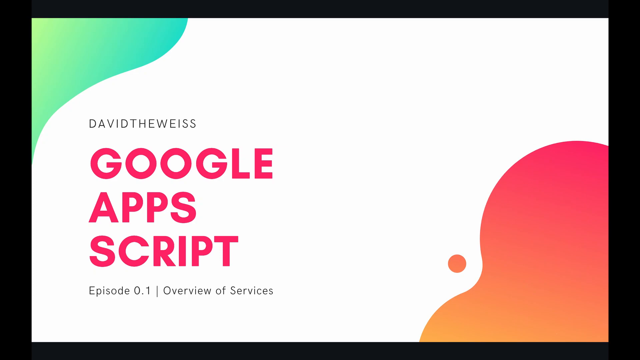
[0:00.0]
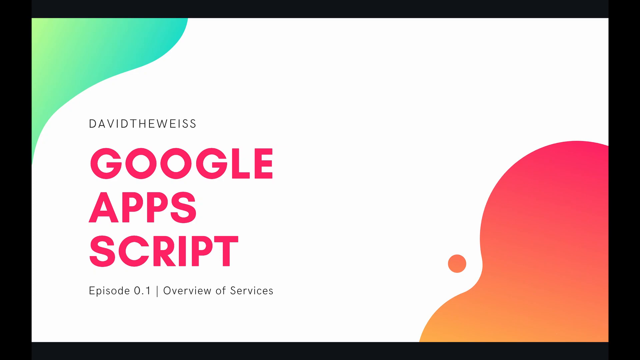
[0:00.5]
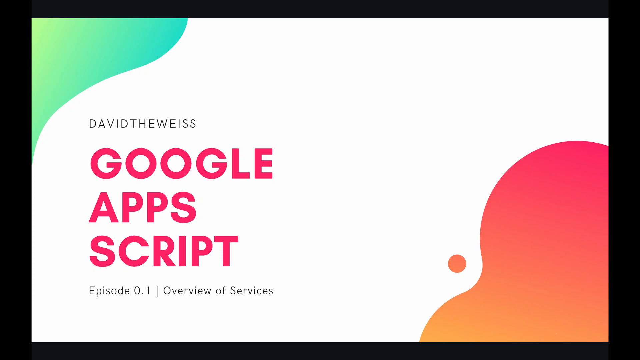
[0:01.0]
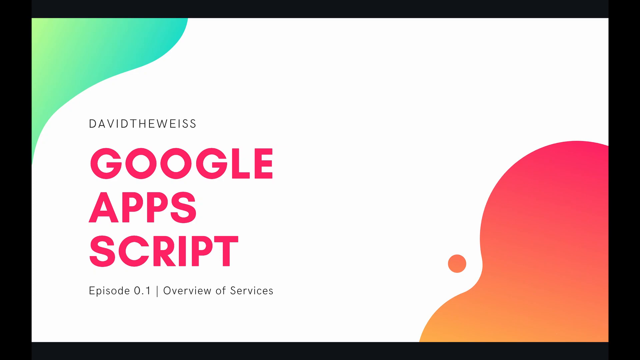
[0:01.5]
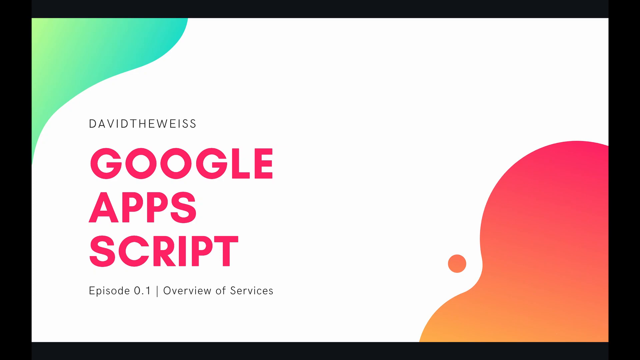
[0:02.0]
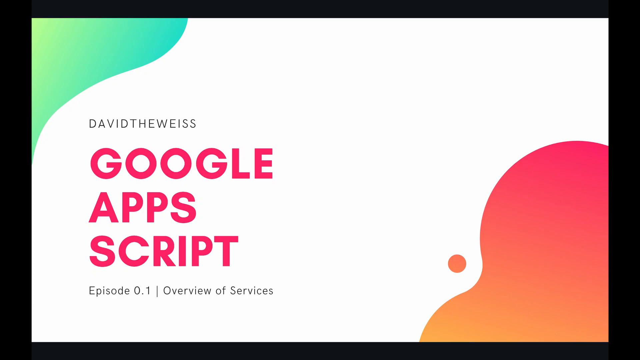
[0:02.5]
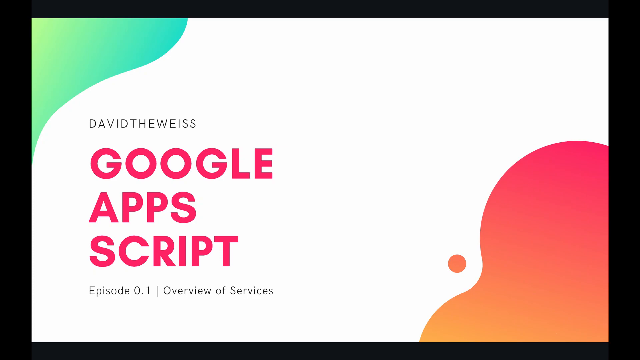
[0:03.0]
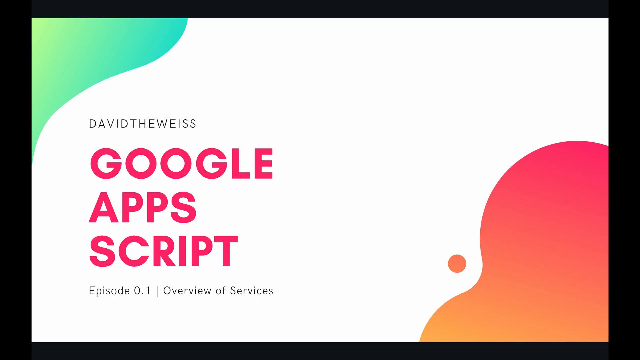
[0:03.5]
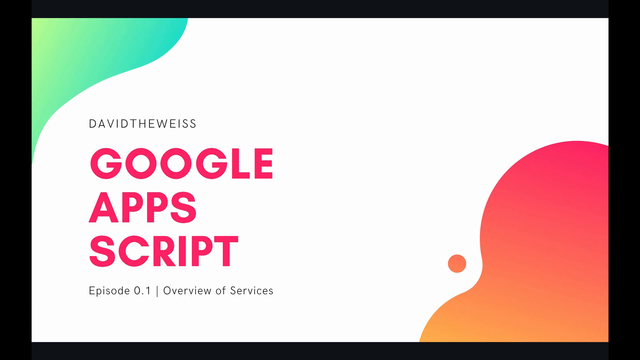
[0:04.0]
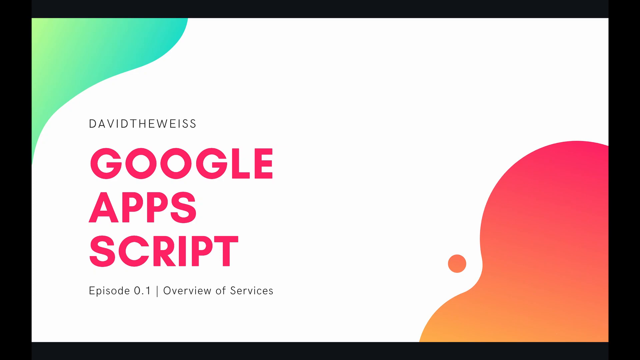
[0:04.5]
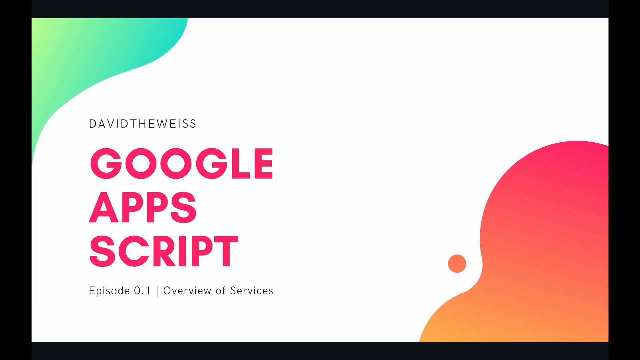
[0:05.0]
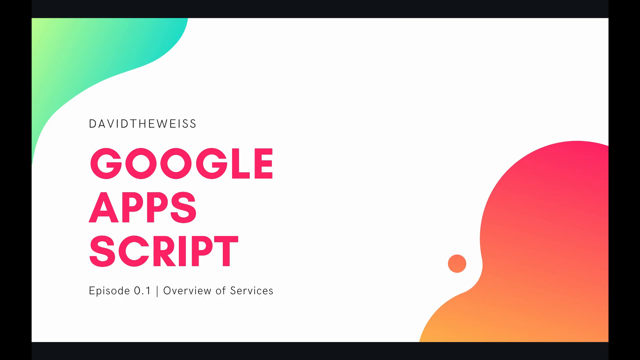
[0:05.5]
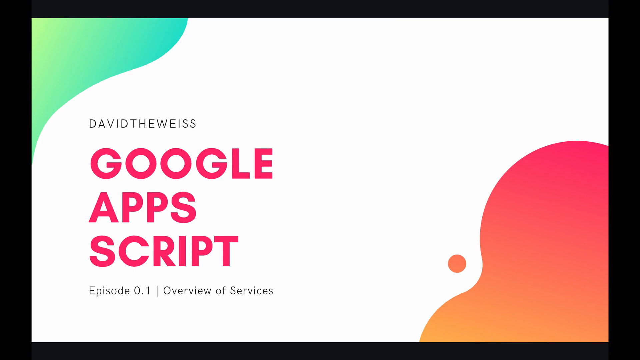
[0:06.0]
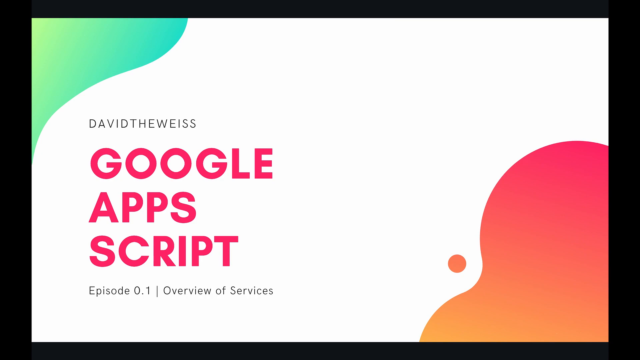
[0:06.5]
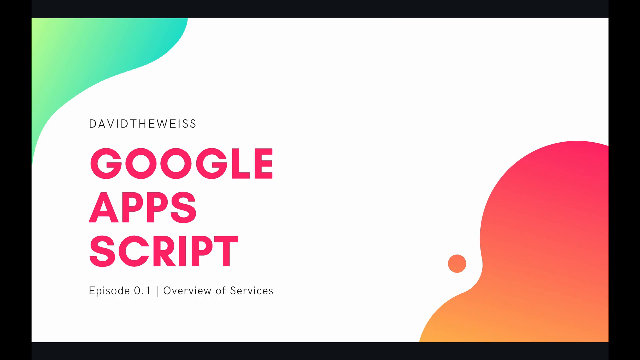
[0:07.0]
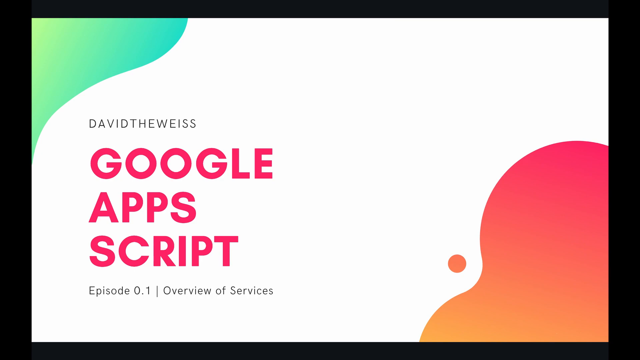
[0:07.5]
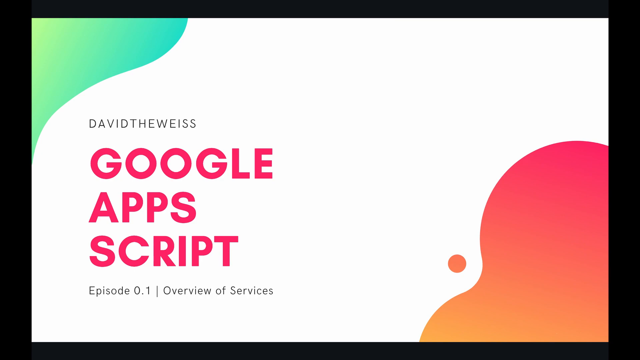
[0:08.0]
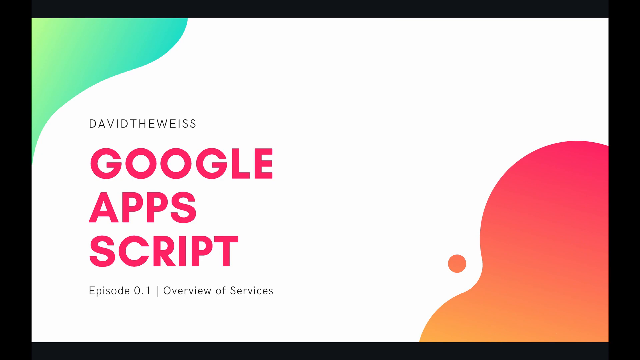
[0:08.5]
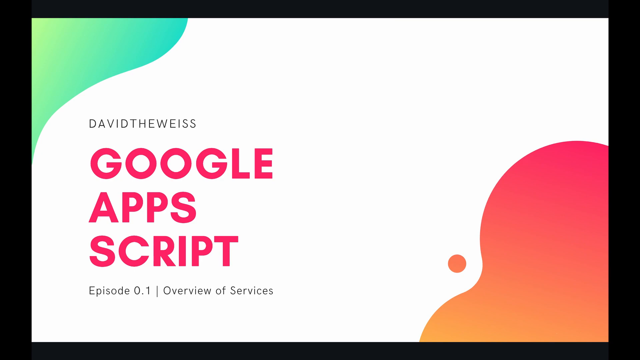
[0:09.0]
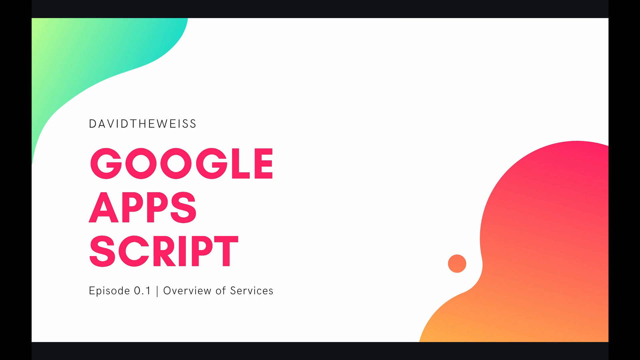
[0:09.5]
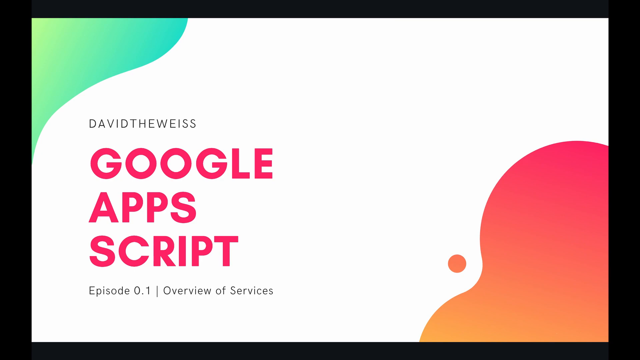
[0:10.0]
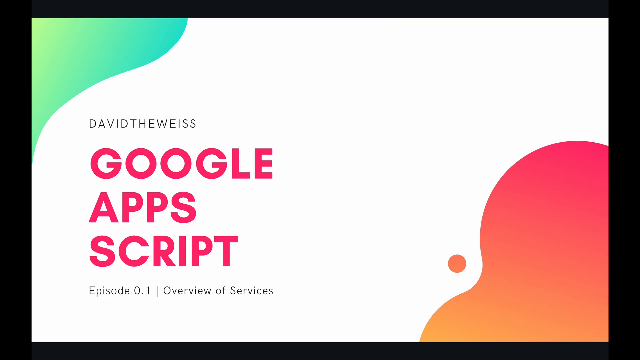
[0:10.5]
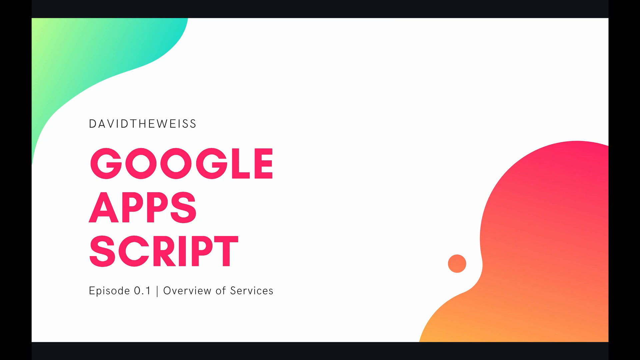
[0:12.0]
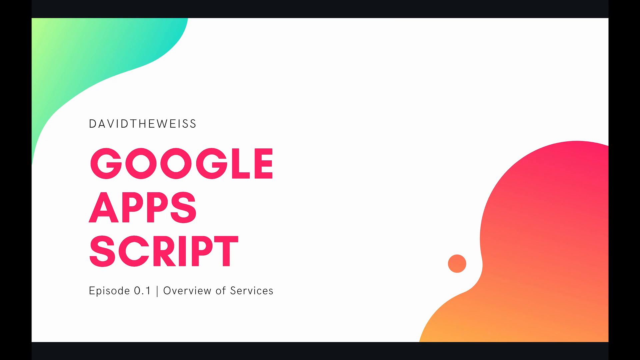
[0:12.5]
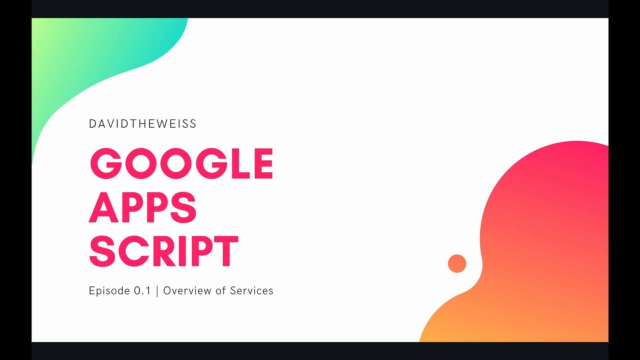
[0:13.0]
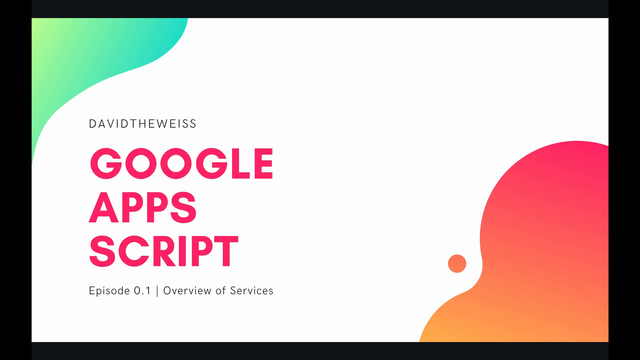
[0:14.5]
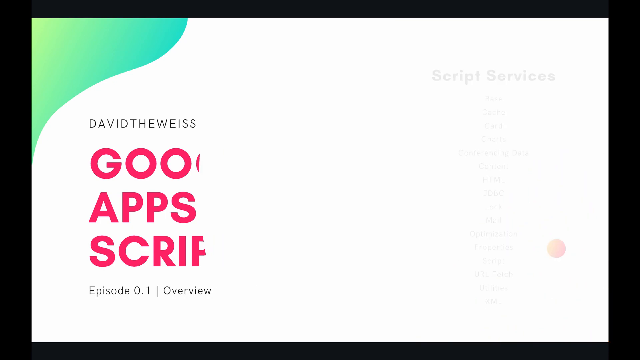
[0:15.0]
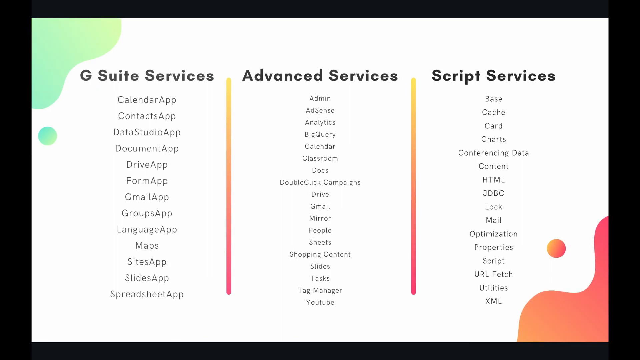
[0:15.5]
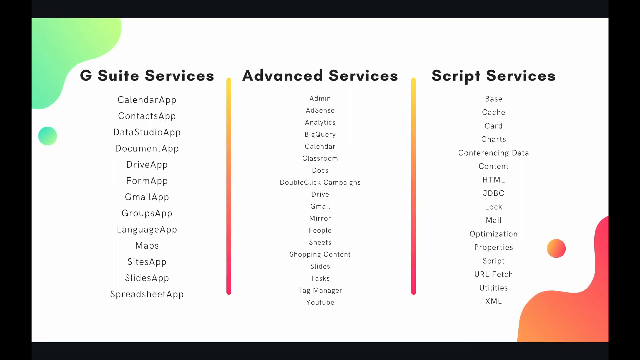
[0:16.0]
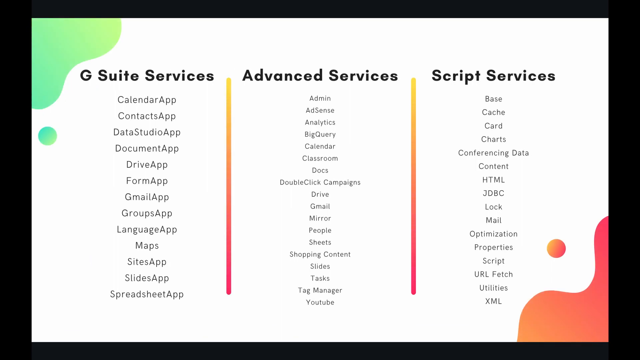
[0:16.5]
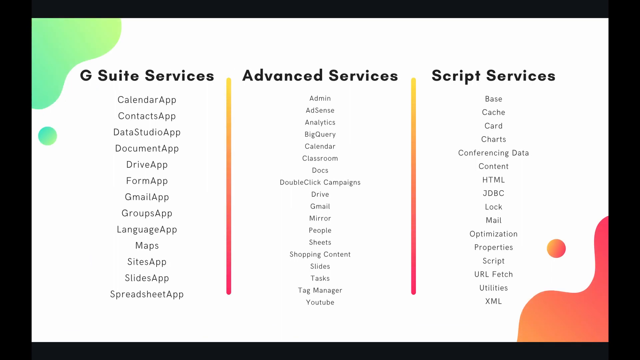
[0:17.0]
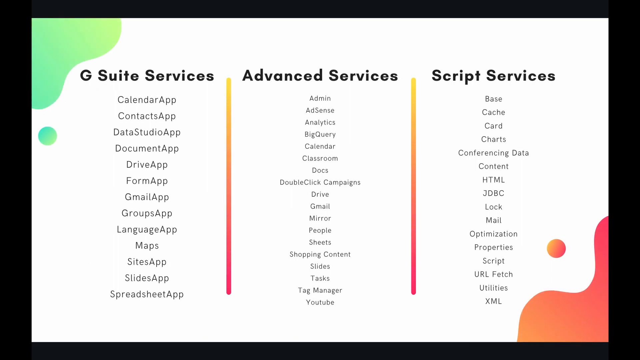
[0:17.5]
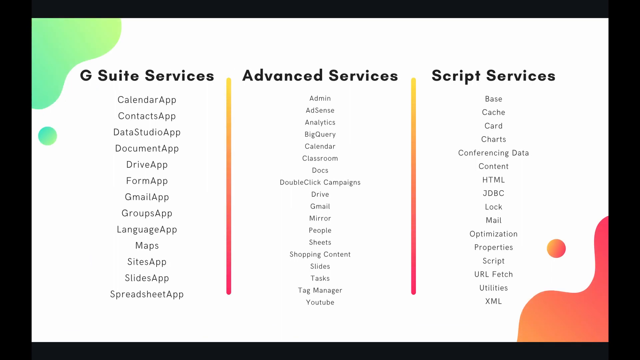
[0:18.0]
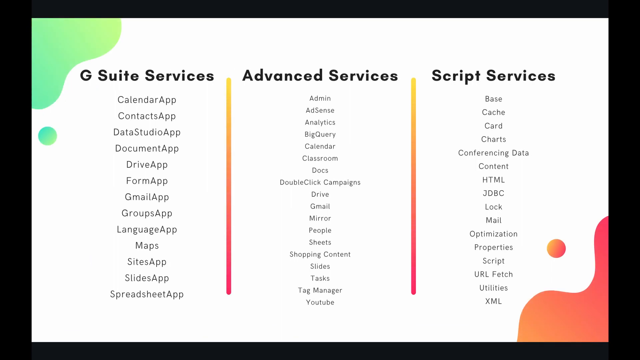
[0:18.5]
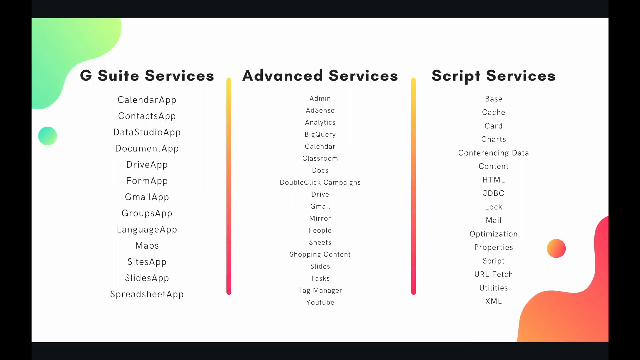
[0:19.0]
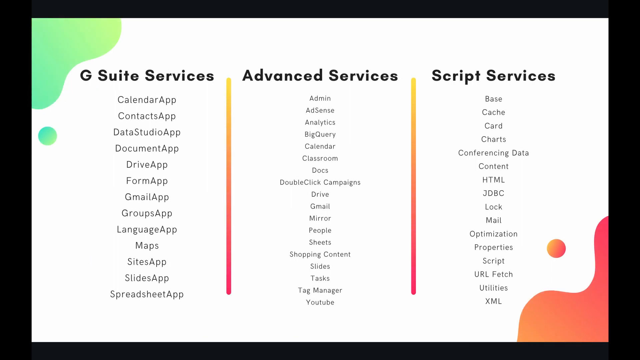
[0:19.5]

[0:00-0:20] A slide opens the video. A large white area runs through the middle of the screen, starting in the lower left and curving up to the upper right. An aqua green blob is in the upper left corner, and a red-orangish blob is on the lower right side, with a small circle of the same color to its left. On the left side of the screen are the words "Google Apps Script" in red, and below them "episode 0.1", followed by a vertical dash and the words "overview of services". The screen holds for several seconds, then transitions to a different screen on the same white background showing three columns, each with a bolded title above it. The left column is titled "G Suite Services", the next column to the right "Advanced Services", and the farthest right "Script Services". Each column lists features. Under G Suite Services: Calendar app, Contacts app, Data Studio app, Document app, Drive app, Form app, Gmail app, Groups app, Language app, Maps, Sites app, Slides app, Spreadsheet app. Under Advanced Services: Admin, AdSense, Analytics, BigQuery, Calendar, Classroom, Docs, DoubleClick Campaigns, Drive, Gmail, Mirror, People, Sheets, Shopping Content, Slides, Tasks, Tag Manager, YouTube. Under Script Services: Base, Cache, Card, Charts, Conferencing Data, Content, HTML, JDBC, Lock, Mail, Optimization, Property, Script, URL Fetch, Utilities, XML.